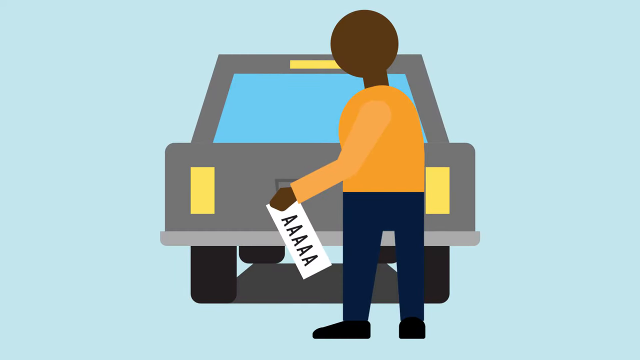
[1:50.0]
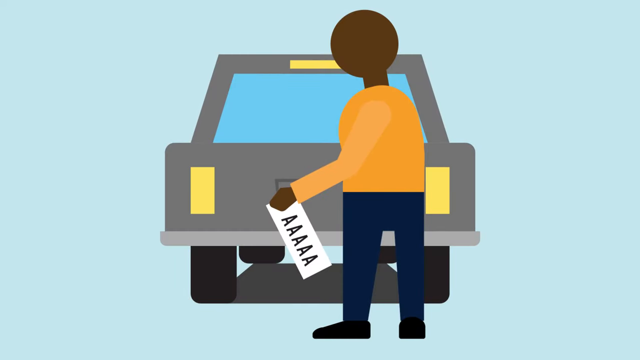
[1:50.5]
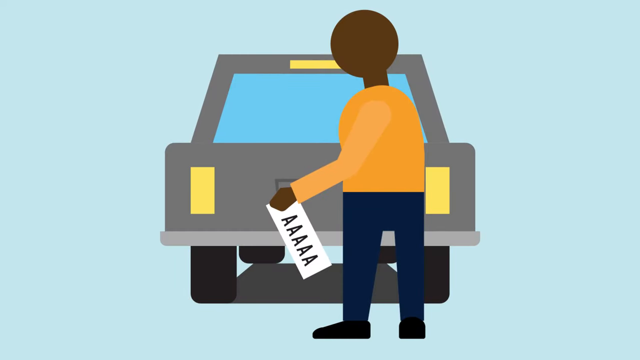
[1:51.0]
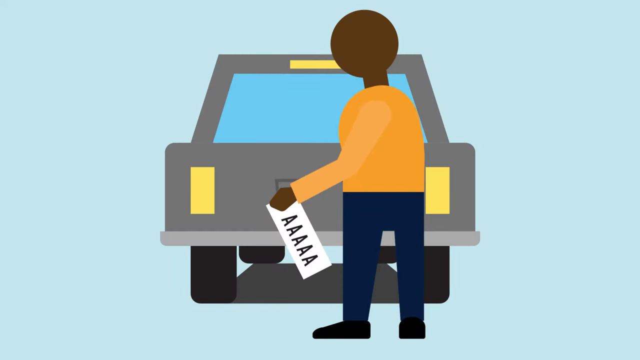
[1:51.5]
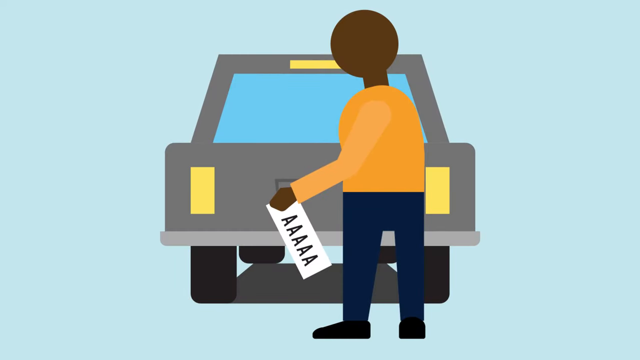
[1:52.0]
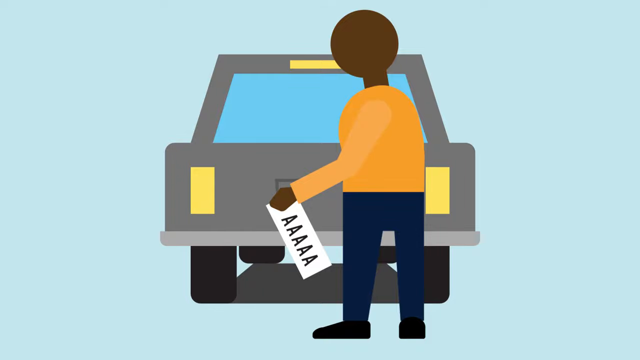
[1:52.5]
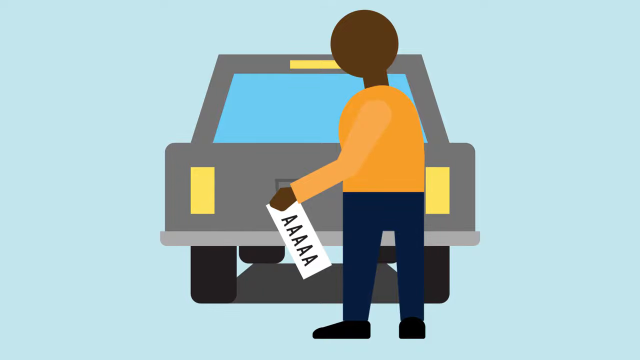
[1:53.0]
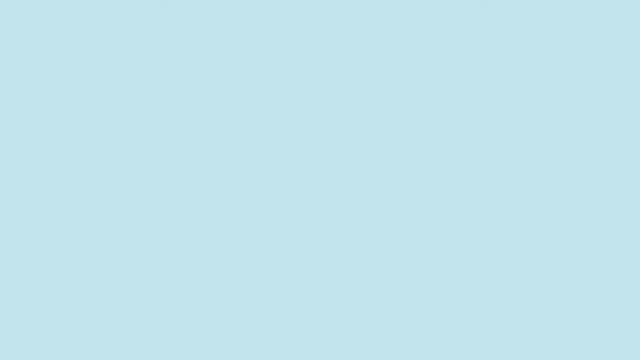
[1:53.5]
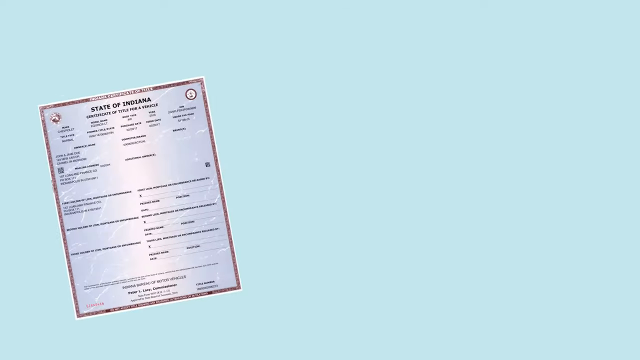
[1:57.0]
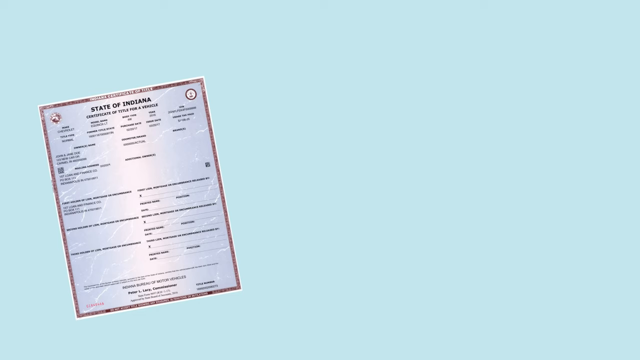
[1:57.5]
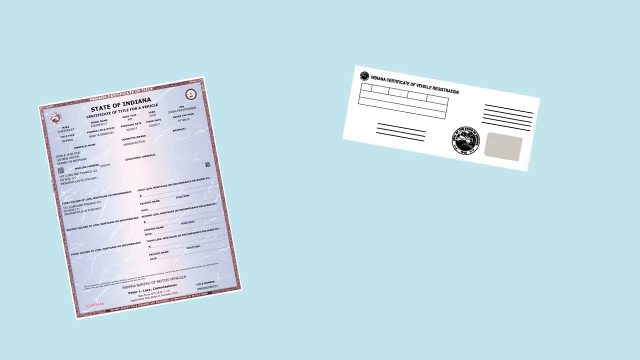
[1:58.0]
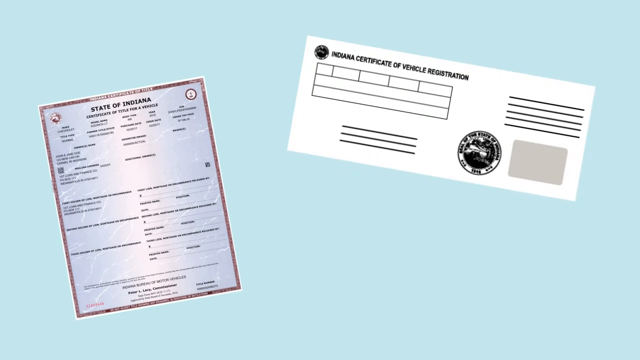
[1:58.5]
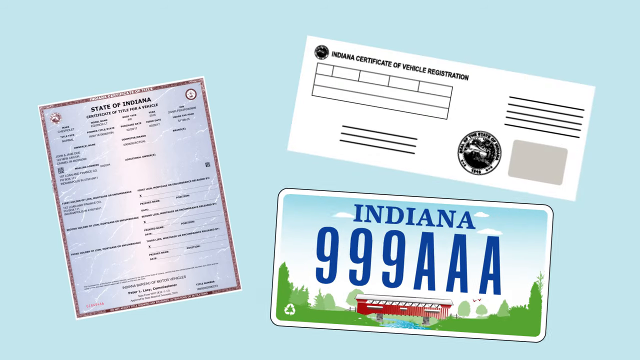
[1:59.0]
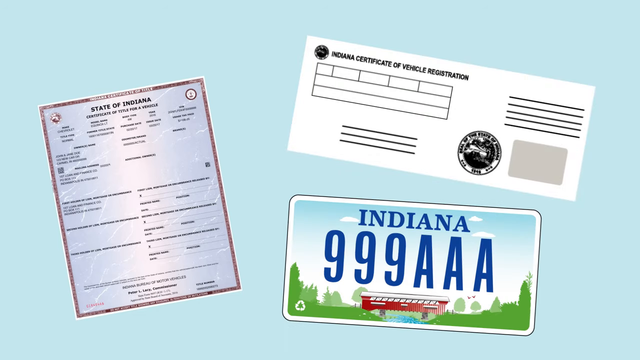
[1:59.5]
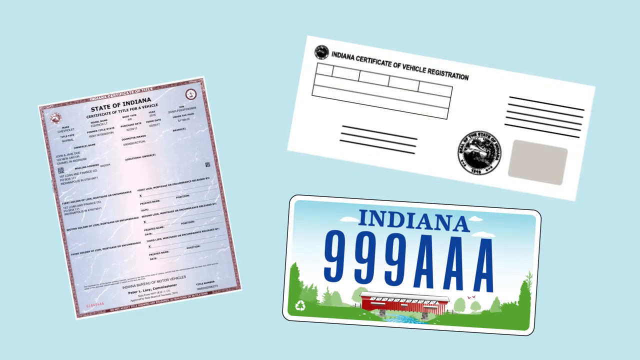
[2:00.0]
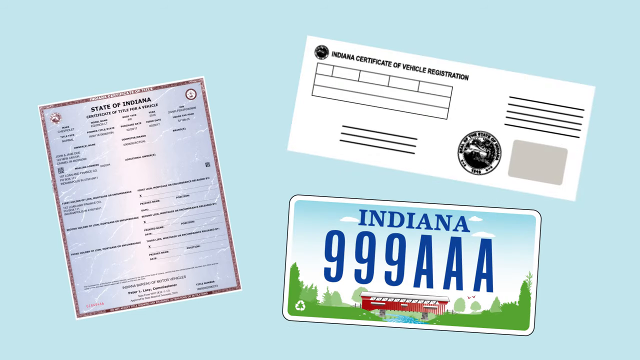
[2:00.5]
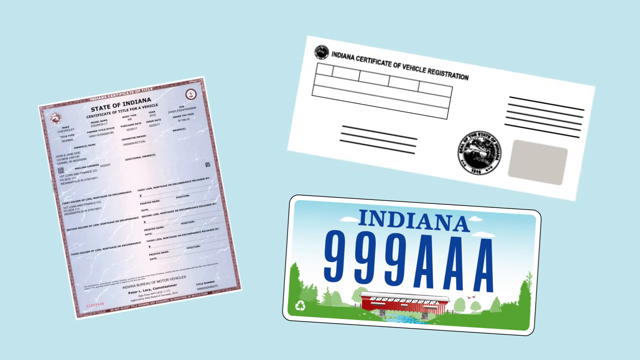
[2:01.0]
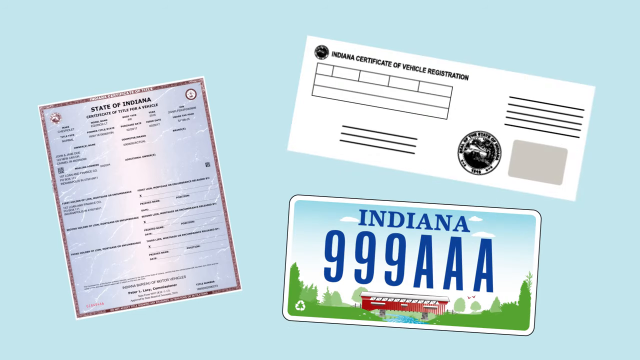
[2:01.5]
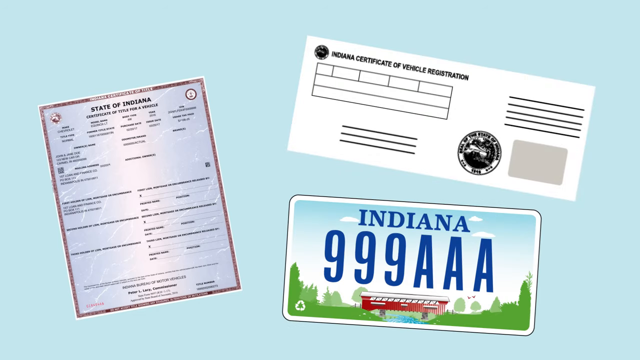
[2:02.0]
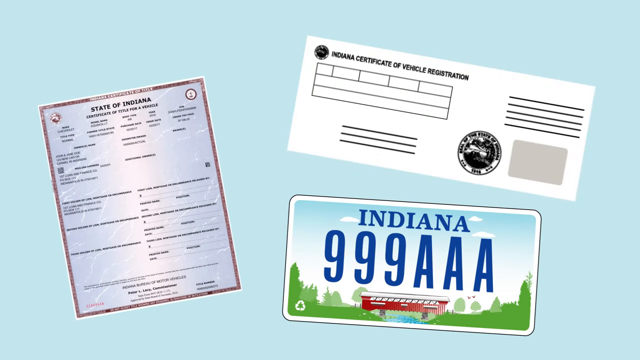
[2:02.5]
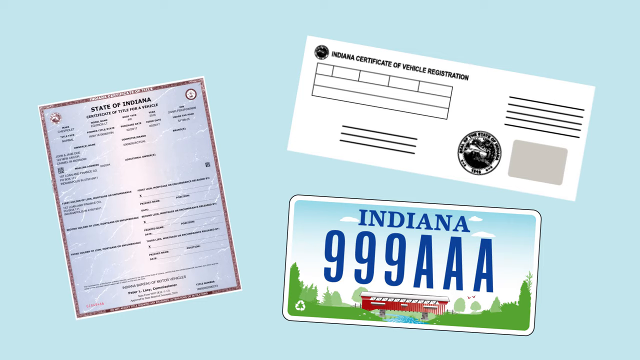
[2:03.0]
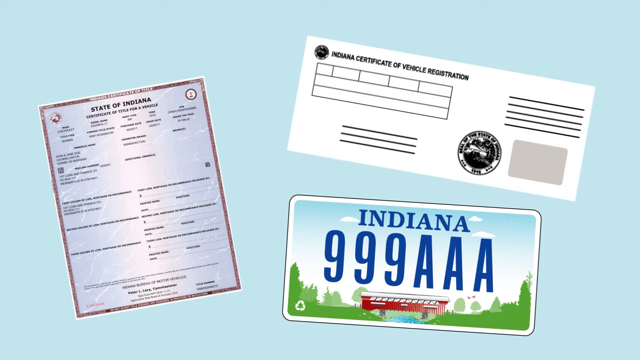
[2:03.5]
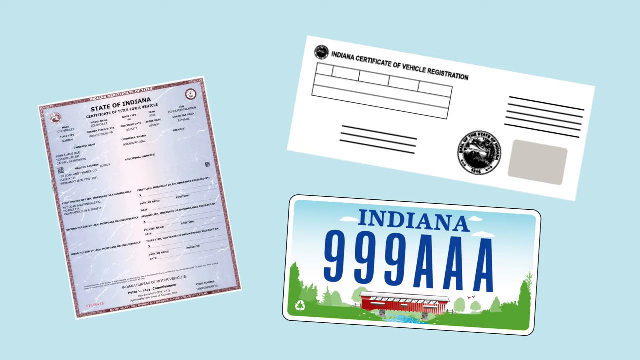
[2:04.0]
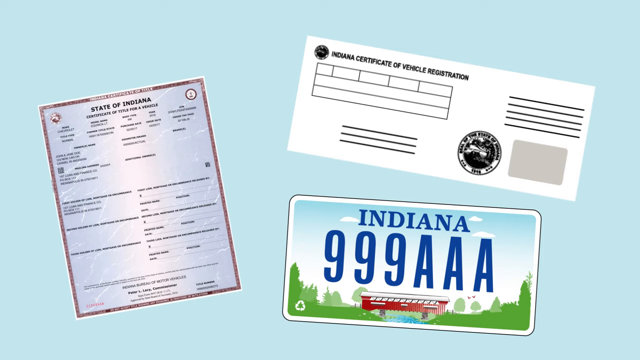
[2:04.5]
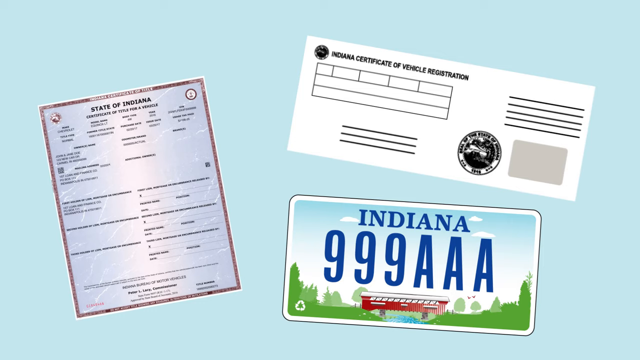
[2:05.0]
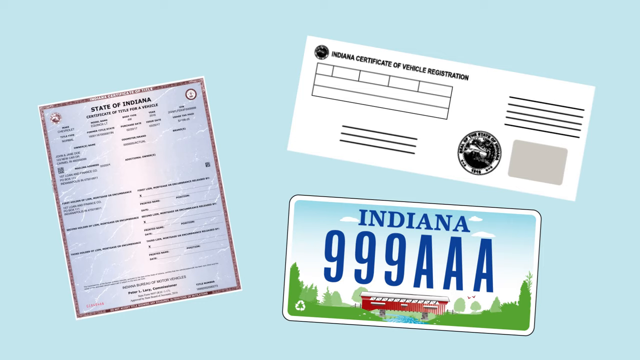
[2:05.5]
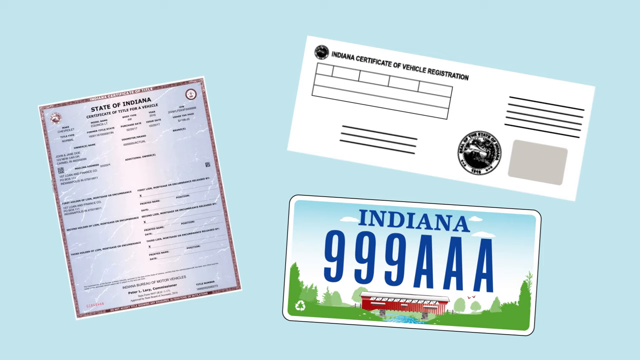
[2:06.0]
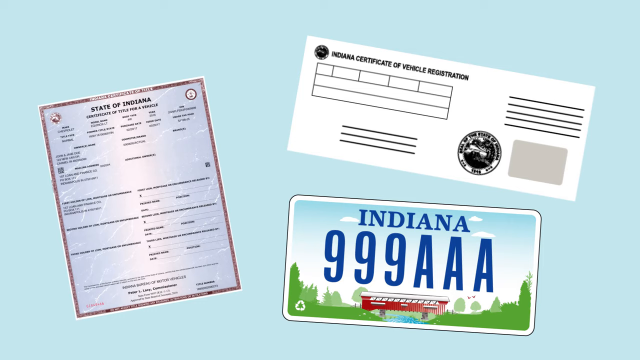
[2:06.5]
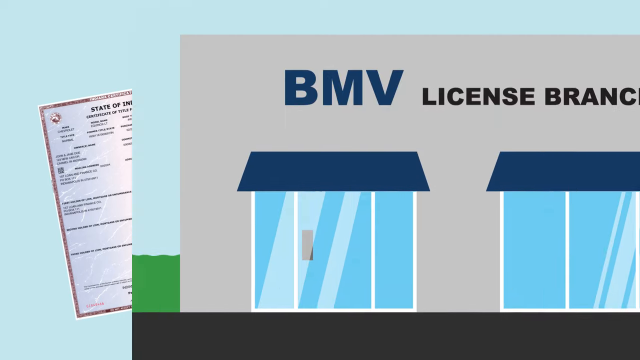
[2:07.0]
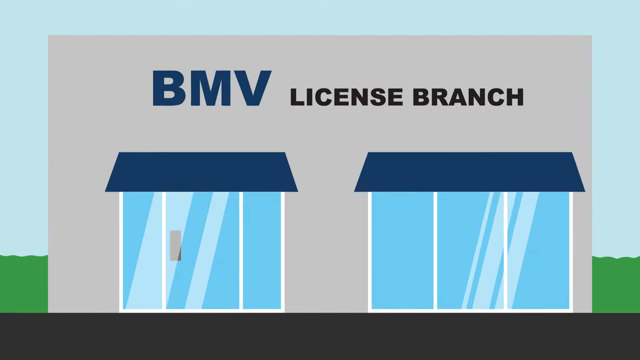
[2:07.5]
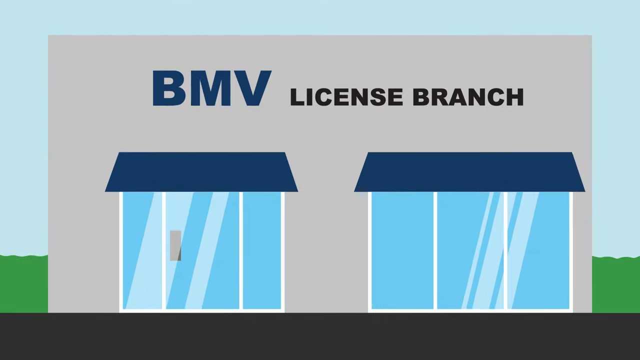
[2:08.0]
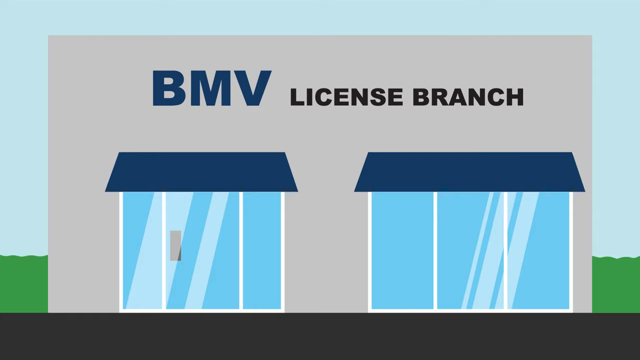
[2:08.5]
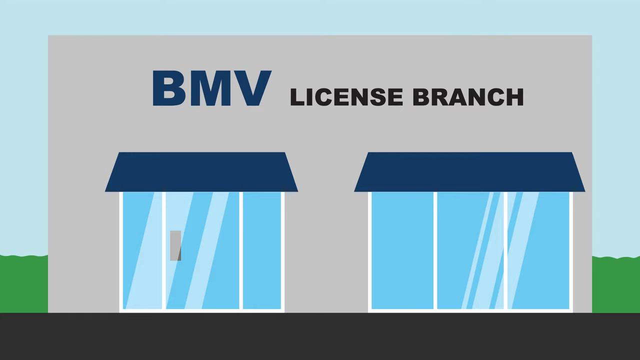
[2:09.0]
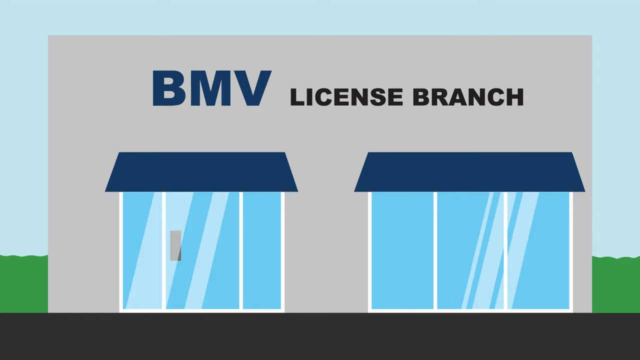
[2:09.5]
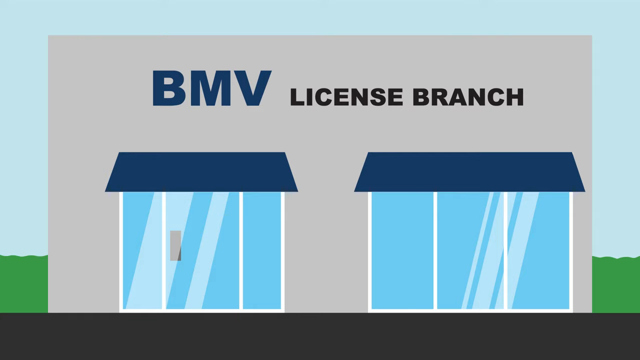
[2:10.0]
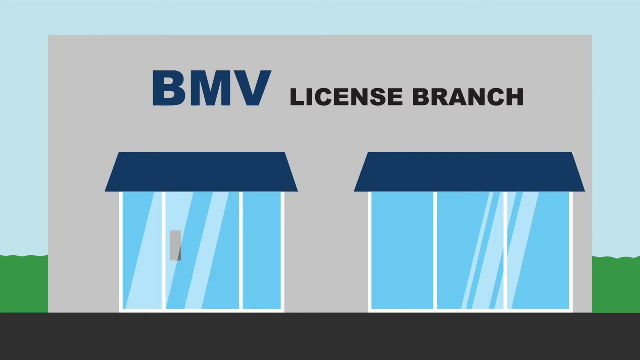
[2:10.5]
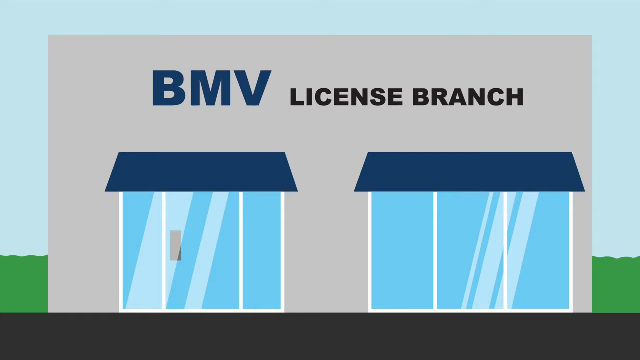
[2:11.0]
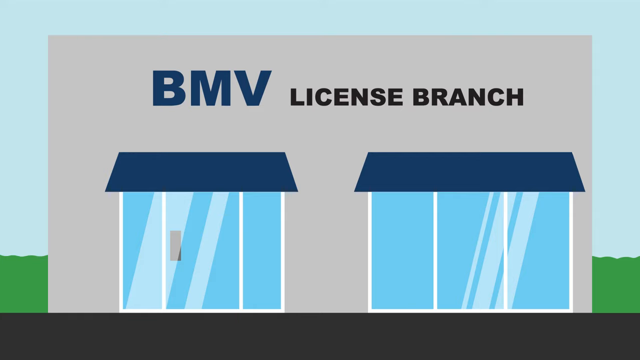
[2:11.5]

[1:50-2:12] The man stands behind a gray car, seen from the rear end with all four tires visible. He holds a license plate in his left hand, his left arm bent at the elbow, gripping the end of the plate tightly. The license plate is white with five capital letter A's on it. The car's two back taillights are visible, and the overhead light on the car is lit up in yellow. The screen then changes to light blue, and the State of Indiana Certificate of Lien pops up in the lower left corner, with the Indiana Certificate of Vehicle Registration paper in the upper right corner. Underneath it is an Indiana license plate with "Indiana" written in blue and "999-AAA". The scene then changes to the BMV license branch building, which has two windows on its front, each made up of three sections, and each section has a blue awning.